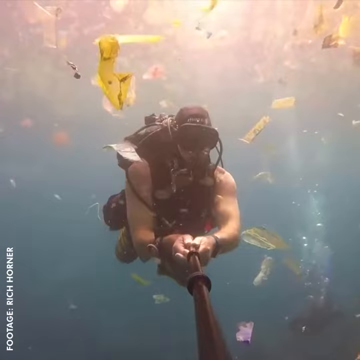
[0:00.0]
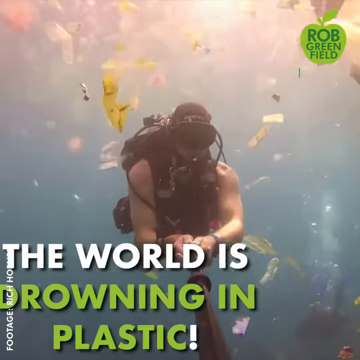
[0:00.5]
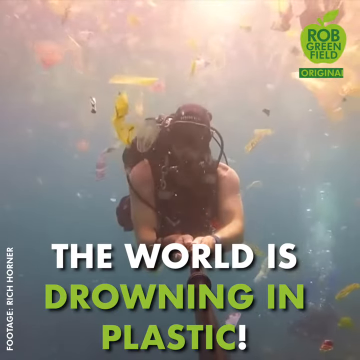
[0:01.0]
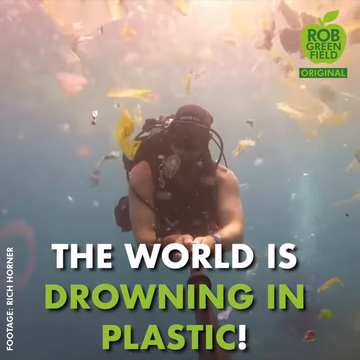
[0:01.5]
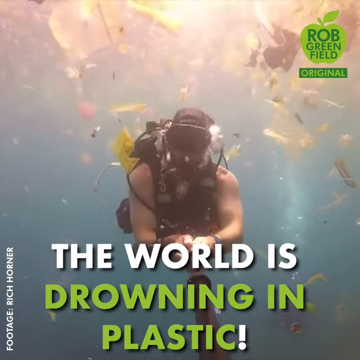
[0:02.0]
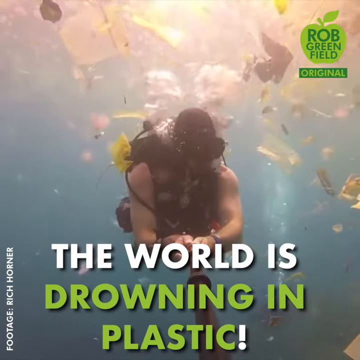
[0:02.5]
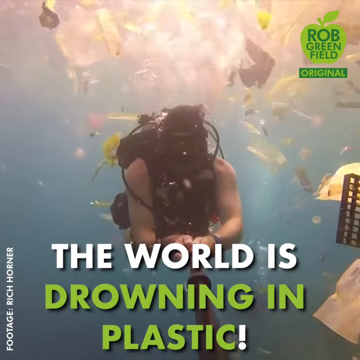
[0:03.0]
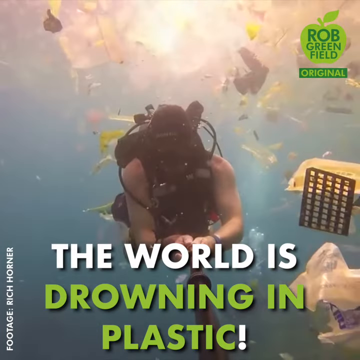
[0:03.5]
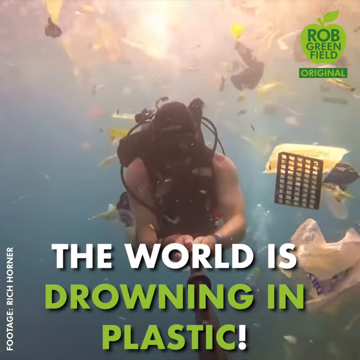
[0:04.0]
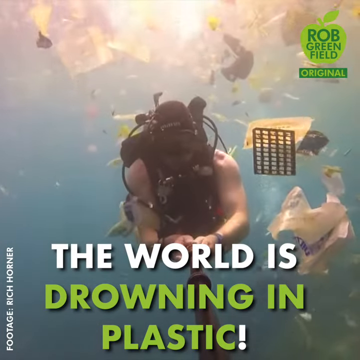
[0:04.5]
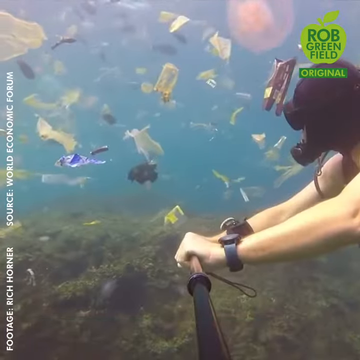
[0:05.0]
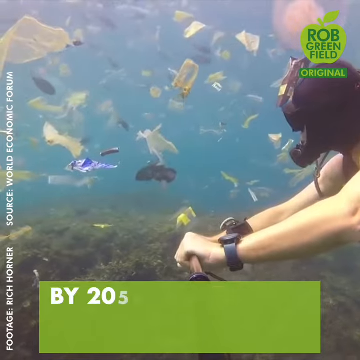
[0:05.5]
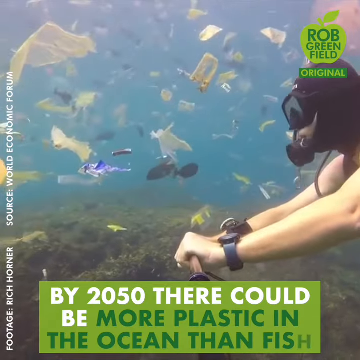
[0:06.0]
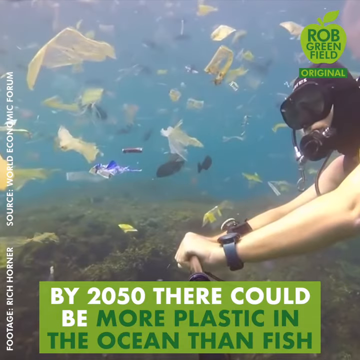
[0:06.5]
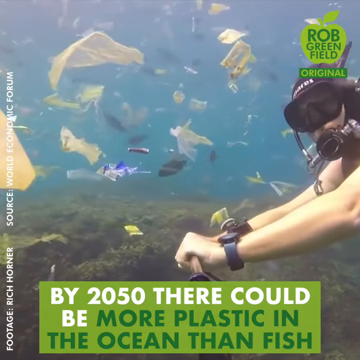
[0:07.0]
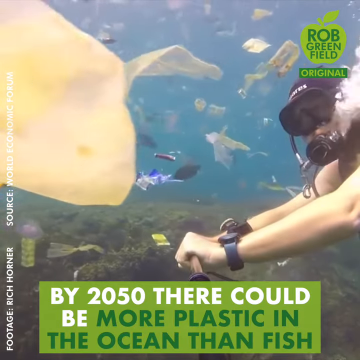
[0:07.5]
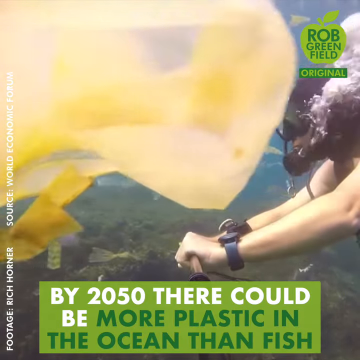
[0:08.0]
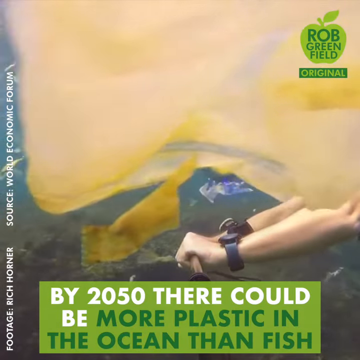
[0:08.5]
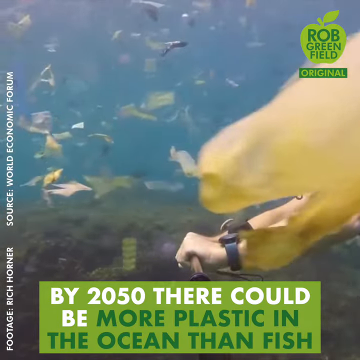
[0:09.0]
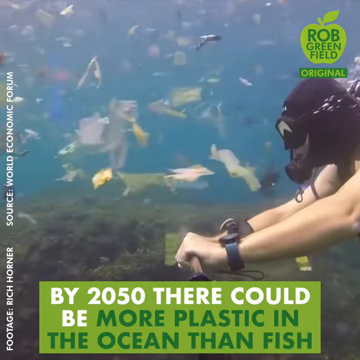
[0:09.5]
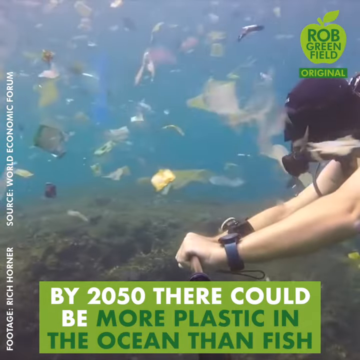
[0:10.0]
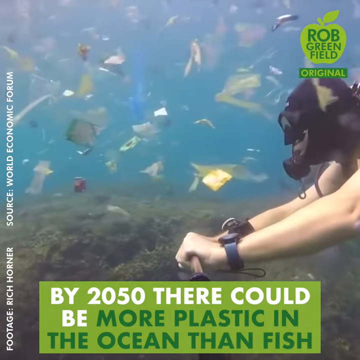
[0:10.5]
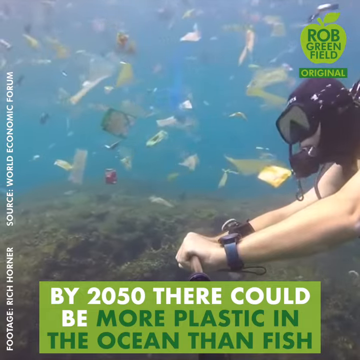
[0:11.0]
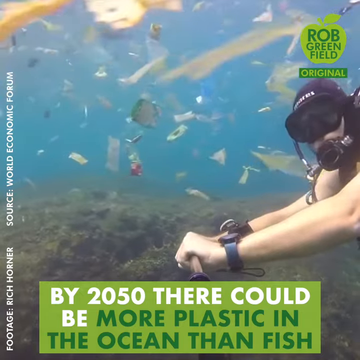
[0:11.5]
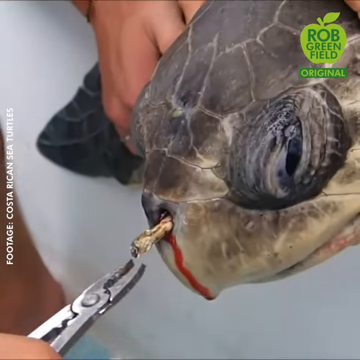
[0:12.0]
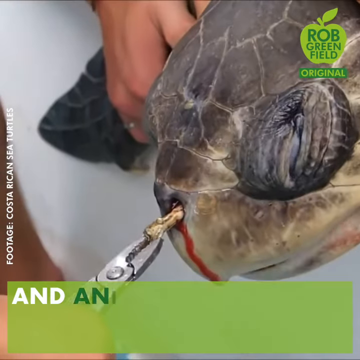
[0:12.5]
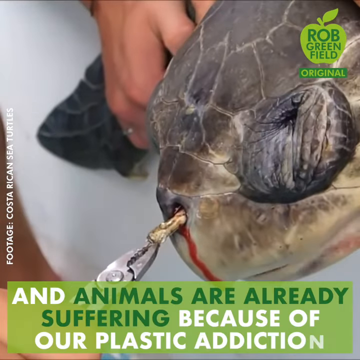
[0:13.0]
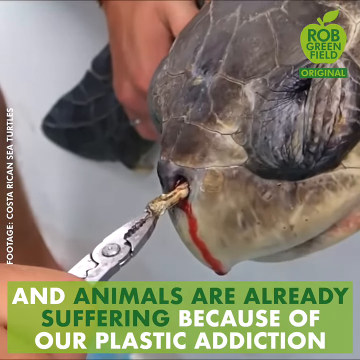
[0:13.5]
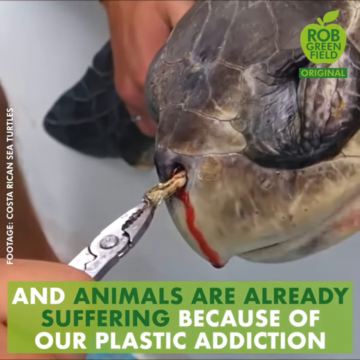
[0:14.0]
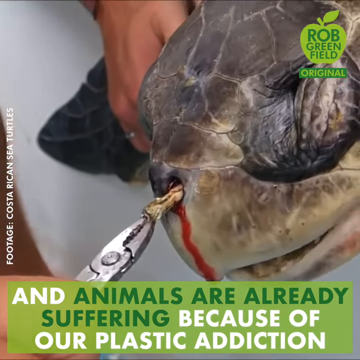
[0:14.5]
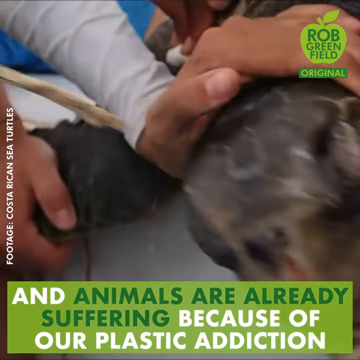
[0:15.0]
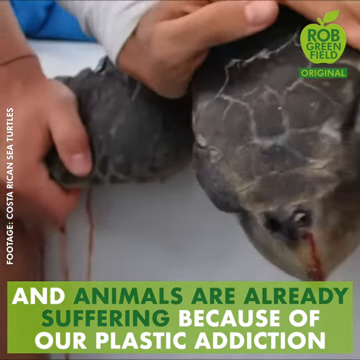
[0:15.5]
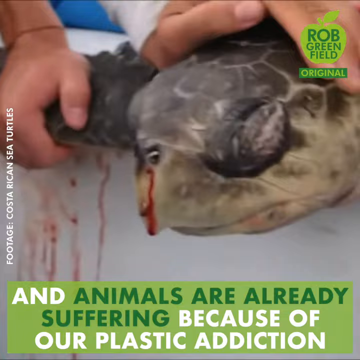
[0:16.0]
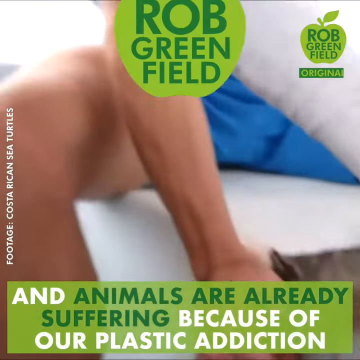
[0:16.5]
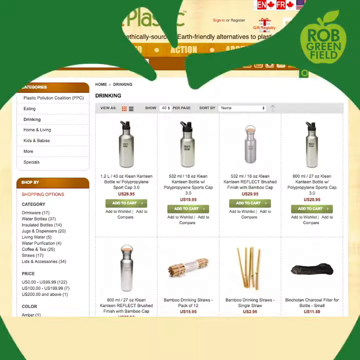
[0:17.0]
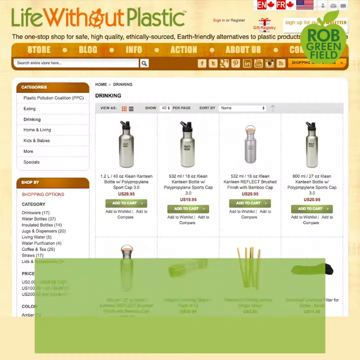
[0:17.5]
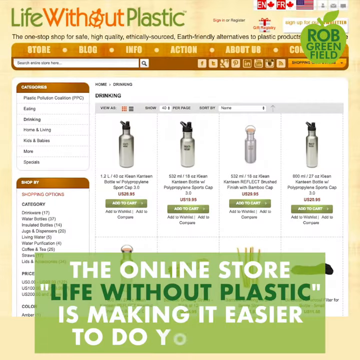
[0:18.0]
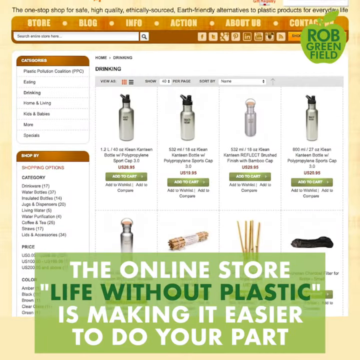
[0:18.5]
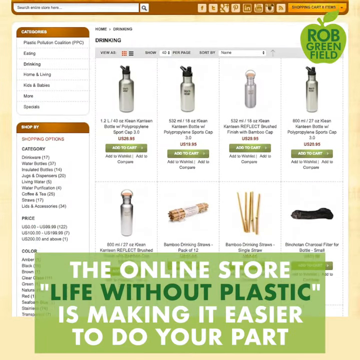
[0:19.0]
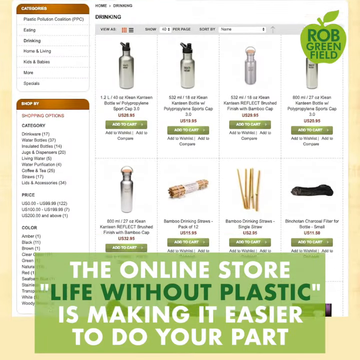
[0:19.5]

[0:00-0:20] On-screen text reads "the world is drowning in plastic!", with "the world is" in white, "drowning in plastic" in yellow, and the exclamation point in white. A single white man, a scuba diver, holds on to what looks like the end of a bicycle handlebar, though it is not; it is something that extends much further above him, out of view, and it seems to be pulling him along the bottom of the ocean. Trash floats all around him, too much to count, mostly white, yellow or brown, including plastic bags, wrappers and maybe plastic bottles such as plastic jugs. The water is cloudy, which makes the debris hard to see, and bubbles come from his mask. The ocean floor is very dark, with a kind of green, mossy look. Text reads "footage by Rich Horner". Another caption appears on the side reading "Source World Economic Forum", and text at the bottom says "by 2050, there could be more plastic in the ocean than fish". Cans and a giant yellow bag float by. The scene changes to a gray fish with a very large eye that seems to have some kind of tubular piece of debris in its mouth. Someone holds the fish down; only a hand and a pair of pliers are visible as they pull the debris out. The caption reads "and animals are already suffering because of our plastic addiction". A web page full of products, like a shopping page, then appears with the text "the online store Life Without Plastic is making easier for you to do your part", and it scrolls through some products.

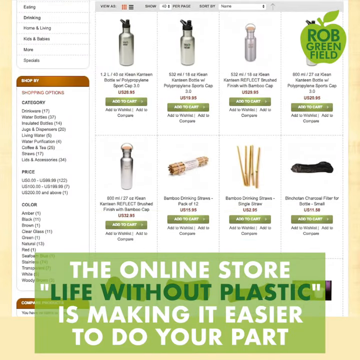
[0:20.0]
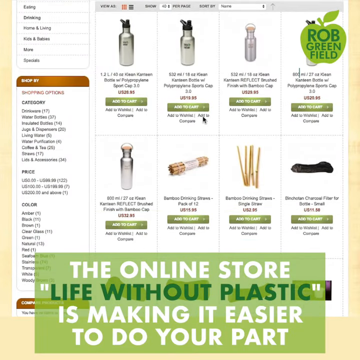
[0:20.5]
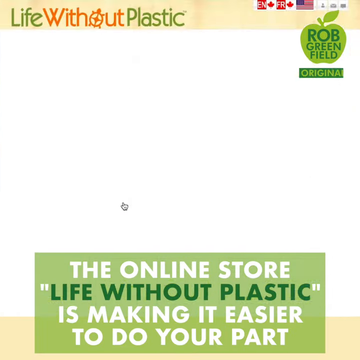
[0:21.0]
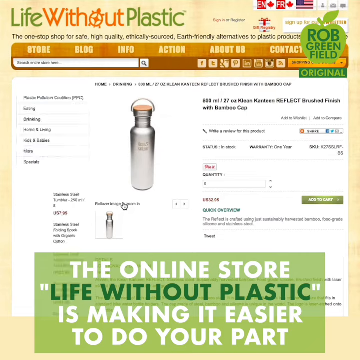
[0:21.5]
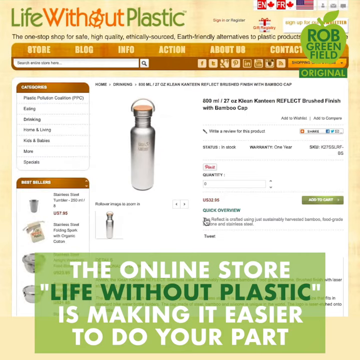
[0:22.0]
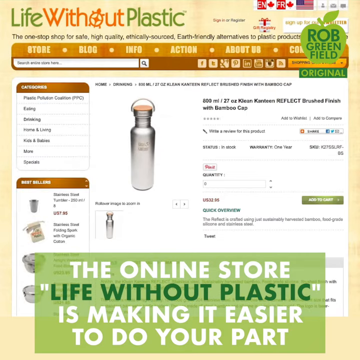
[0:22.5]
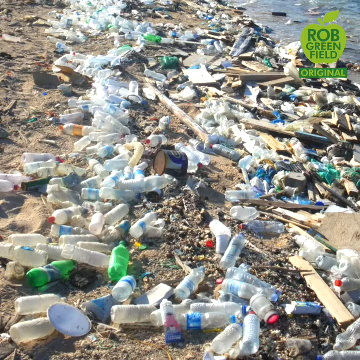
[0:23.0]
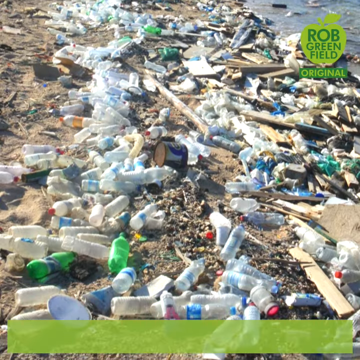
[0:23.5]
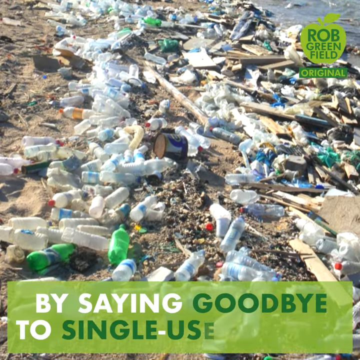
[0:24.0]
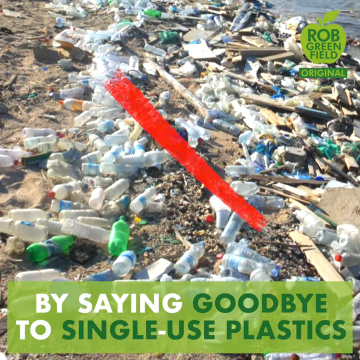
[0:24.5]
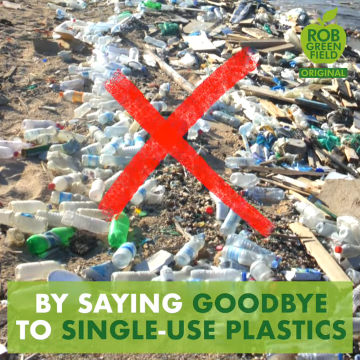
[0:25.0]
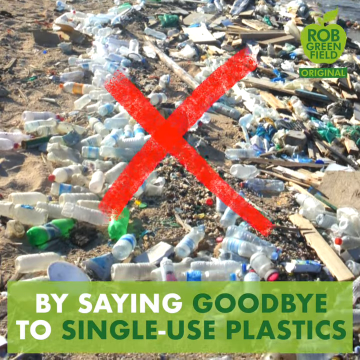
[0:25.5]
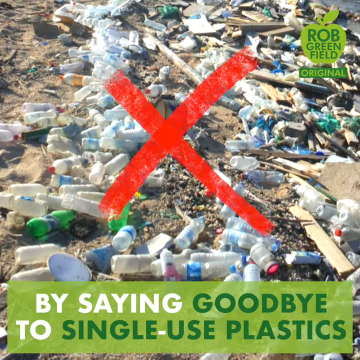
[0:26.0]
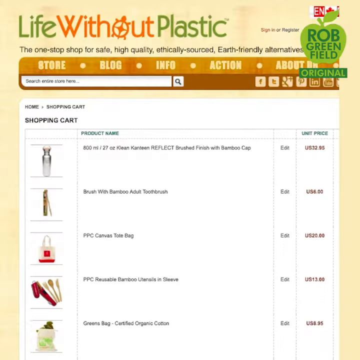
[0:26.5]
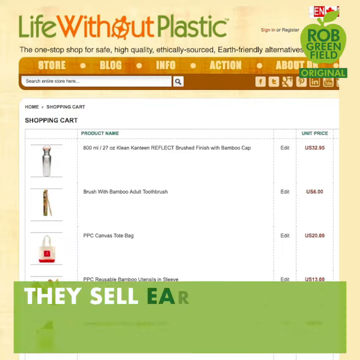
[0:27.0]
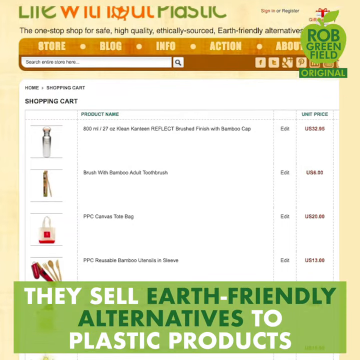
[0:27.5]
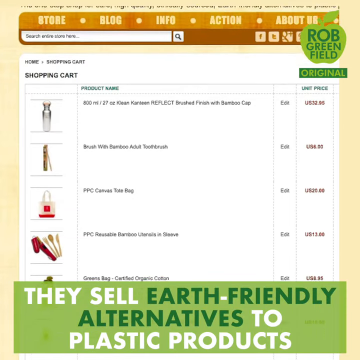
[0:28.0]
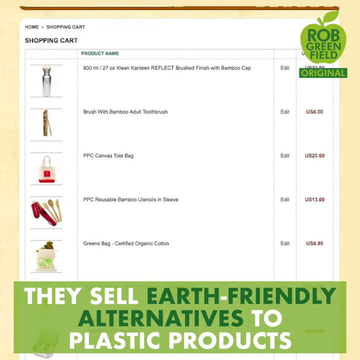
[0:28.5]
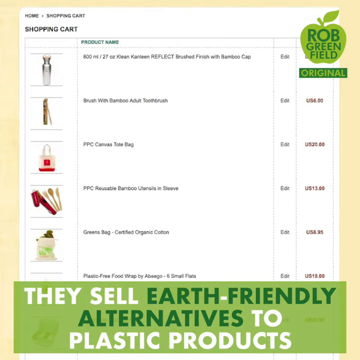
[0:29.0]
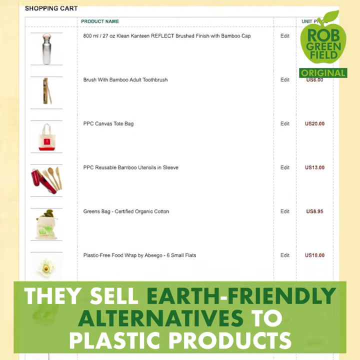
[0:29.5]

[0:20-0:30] The web page reads "The online store, Life Without Plastic, is making it easier for you to do your part." In the upper right corner is a green apple with "Rob Greenfield" in dark green. The URL is not legible. The products appear to be water bottles and some kind of wooden sticks, and the page has a sidebar menu. A water bottle is highlighted, with the text "Life Without Plastic, the one-stop shop for safe, high-quality, ethically-sourced, earth-friendly alternatives to plastic products." The big water bottle is made of metal and appears to have a bamboo lid; the page looks like an ordinary online shopping site. The video cuts to a beach, with text at the bottom reading "by saying goodbye to single-use plastics" and a big red X across the screen. Countless water bottles litter the beach, with more garbage visible than sand. Perhaps 1% of the bottles are green and the rest are clear; some have labels that are mostly blue, and some have lids. A couple of pieces of wood are strewn among them, but it is mostly water bottles. The video then returns to the web page showing some of the products.